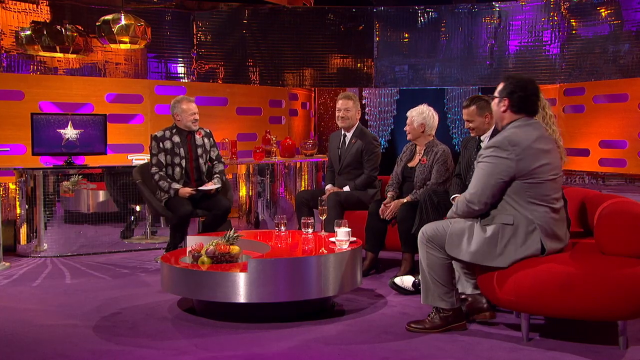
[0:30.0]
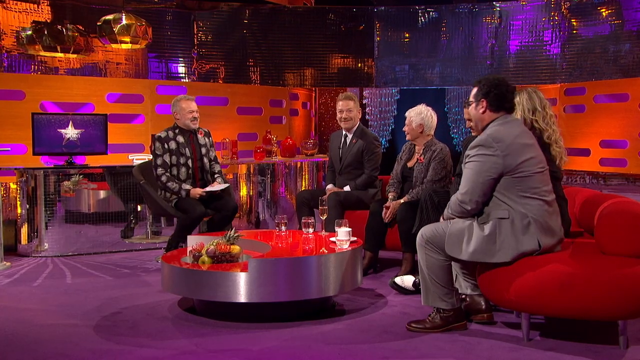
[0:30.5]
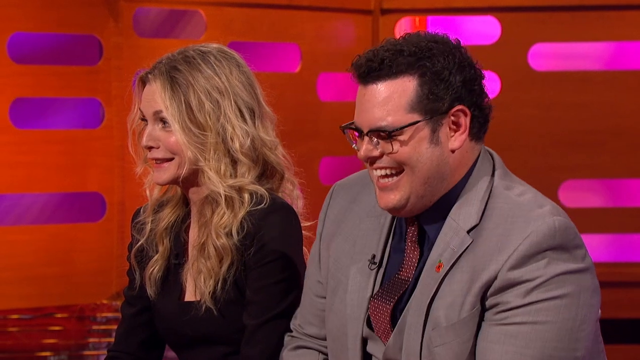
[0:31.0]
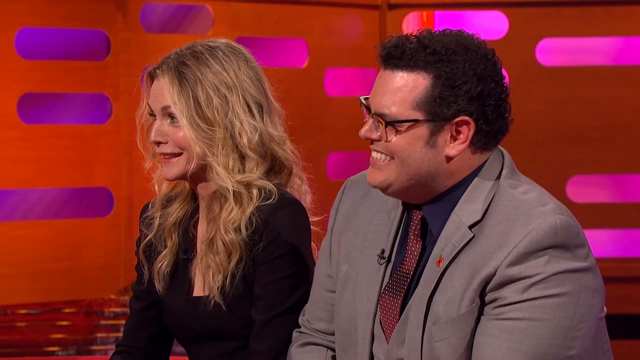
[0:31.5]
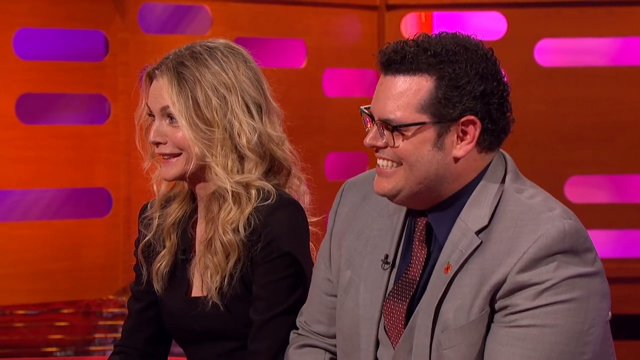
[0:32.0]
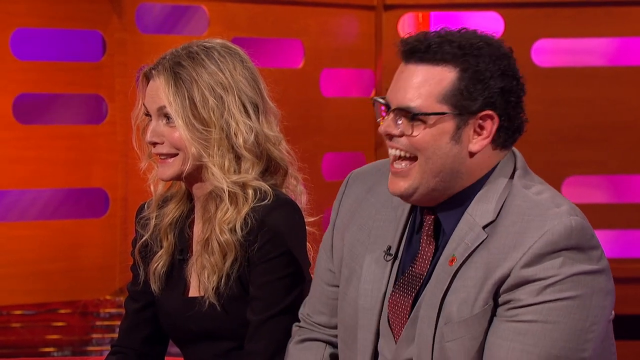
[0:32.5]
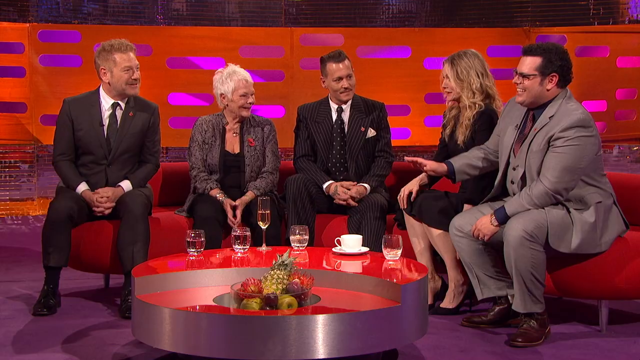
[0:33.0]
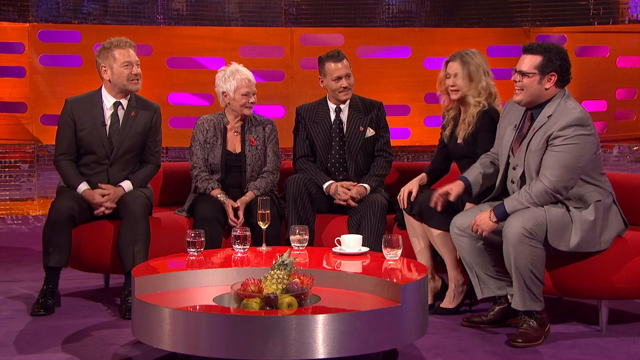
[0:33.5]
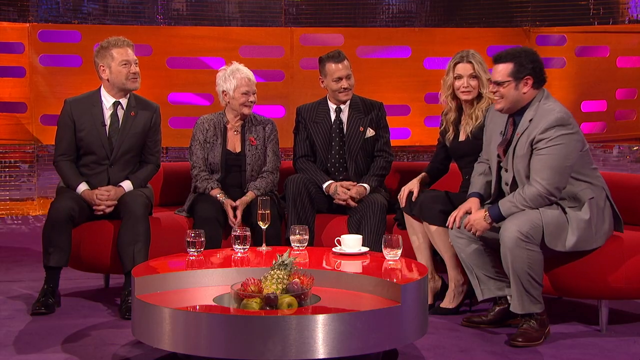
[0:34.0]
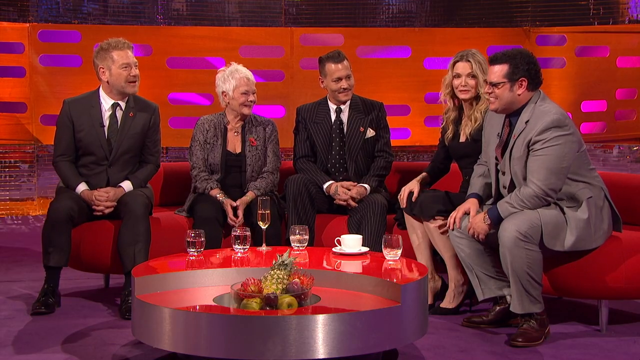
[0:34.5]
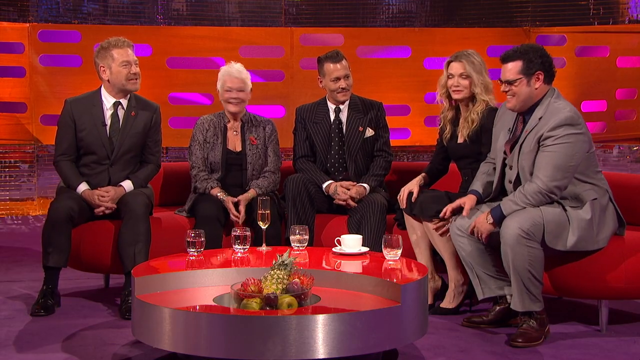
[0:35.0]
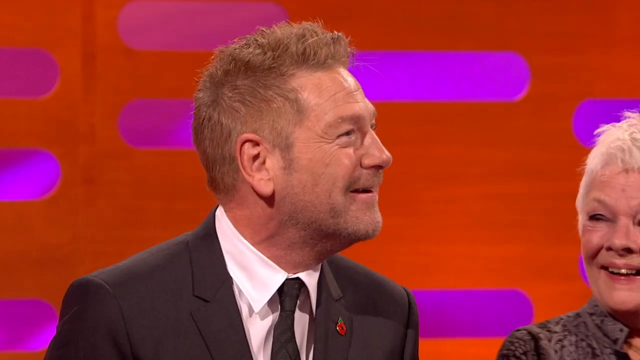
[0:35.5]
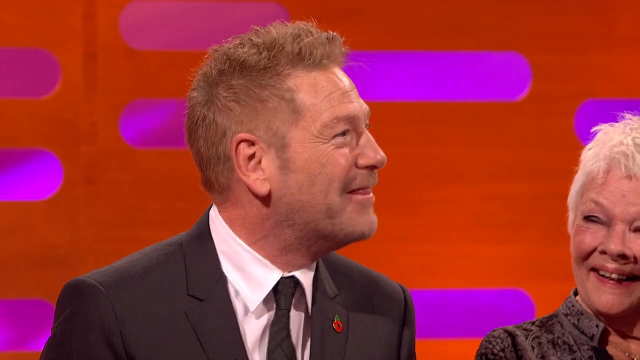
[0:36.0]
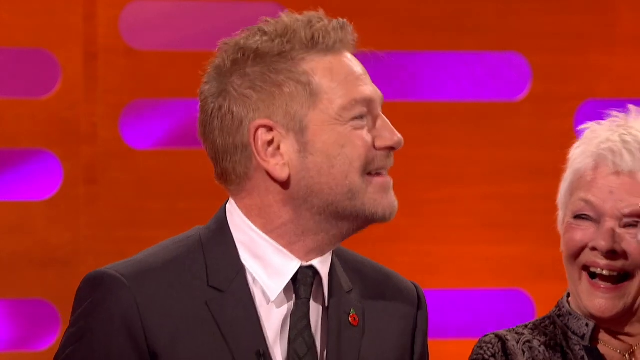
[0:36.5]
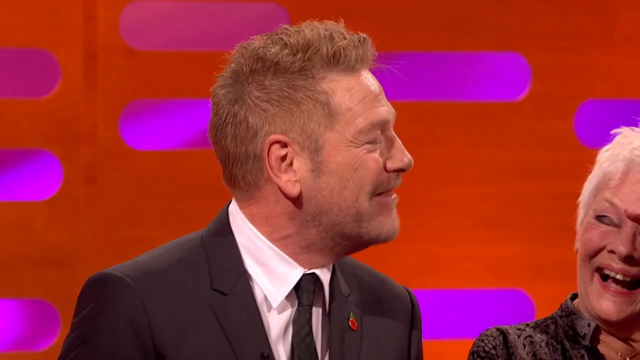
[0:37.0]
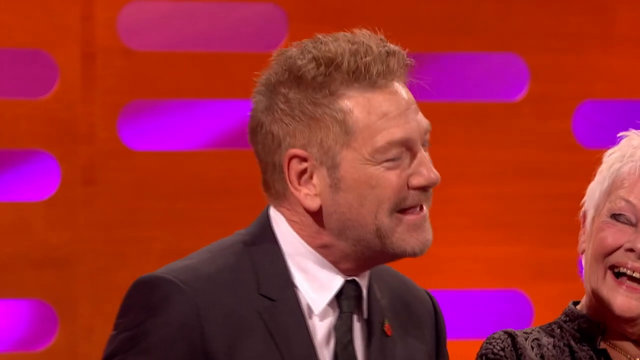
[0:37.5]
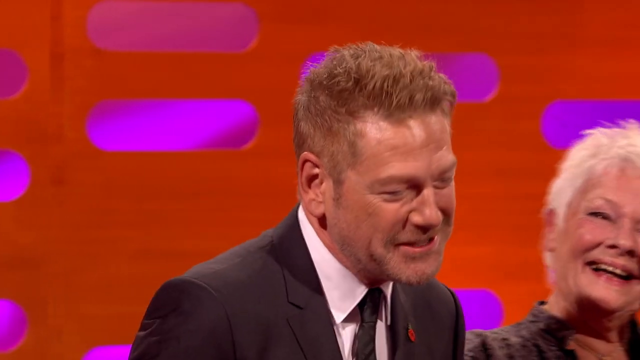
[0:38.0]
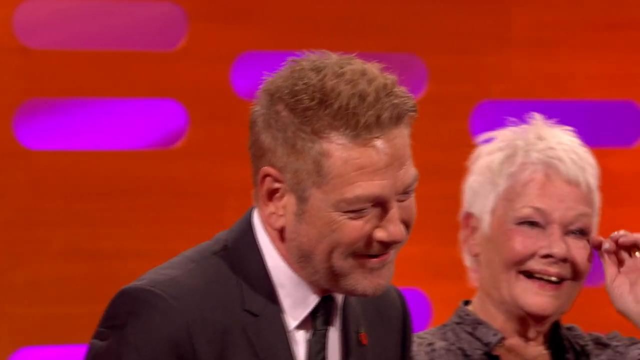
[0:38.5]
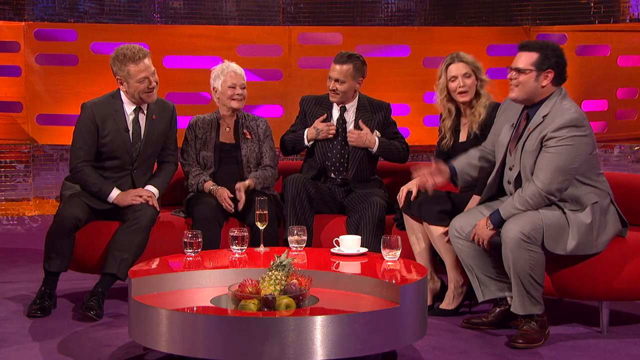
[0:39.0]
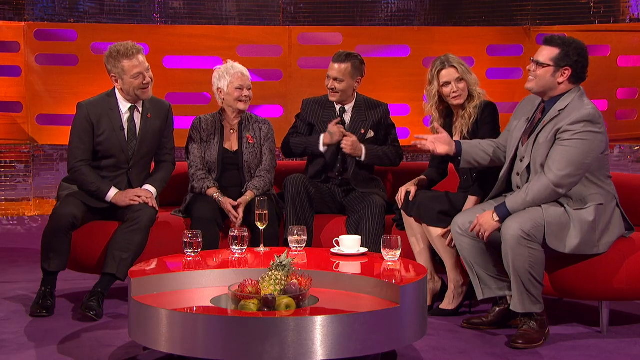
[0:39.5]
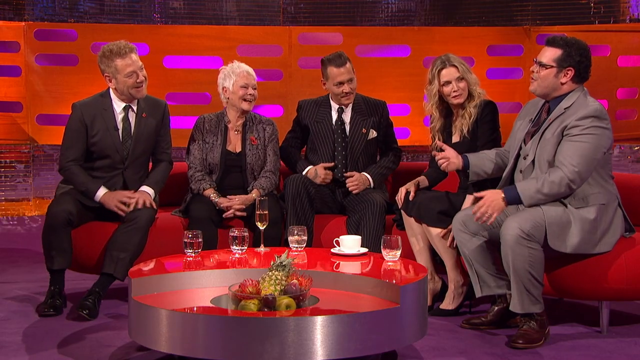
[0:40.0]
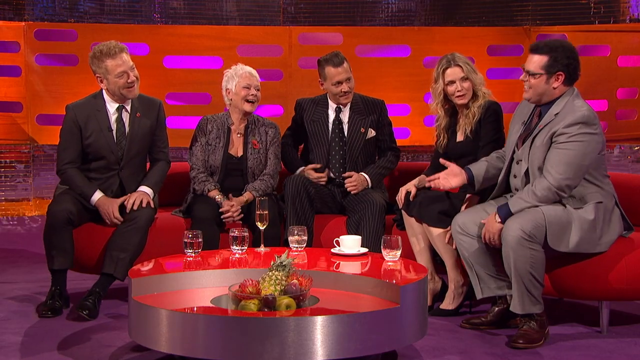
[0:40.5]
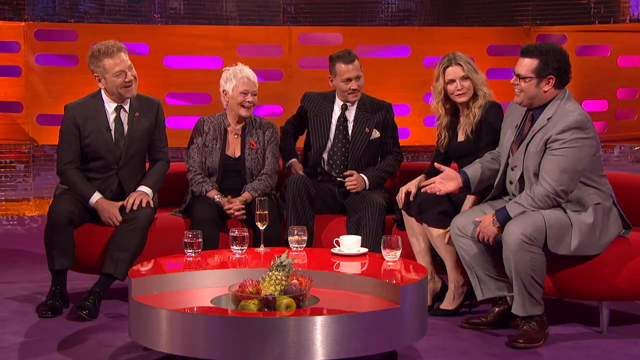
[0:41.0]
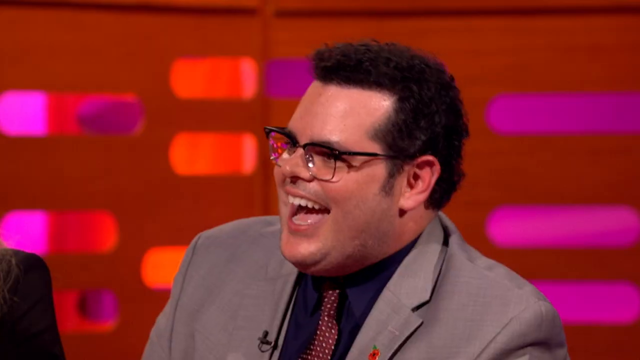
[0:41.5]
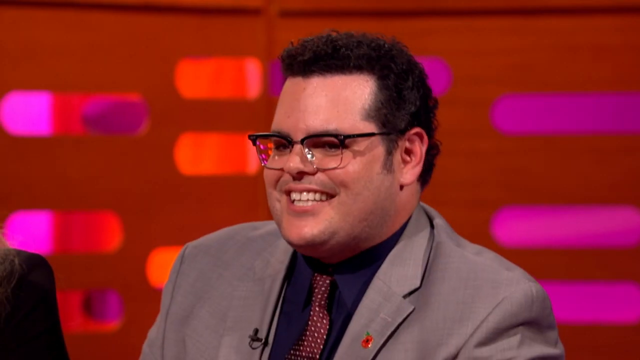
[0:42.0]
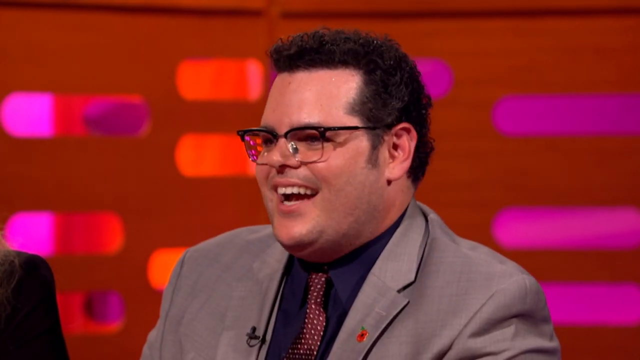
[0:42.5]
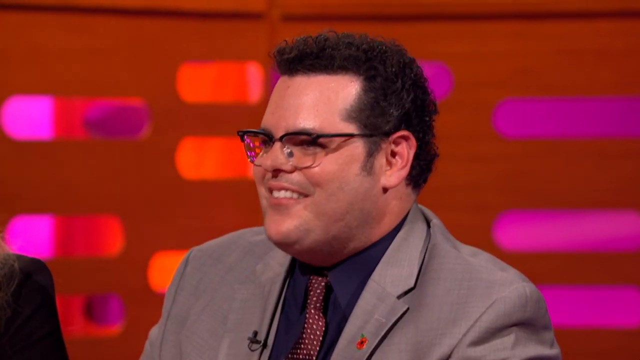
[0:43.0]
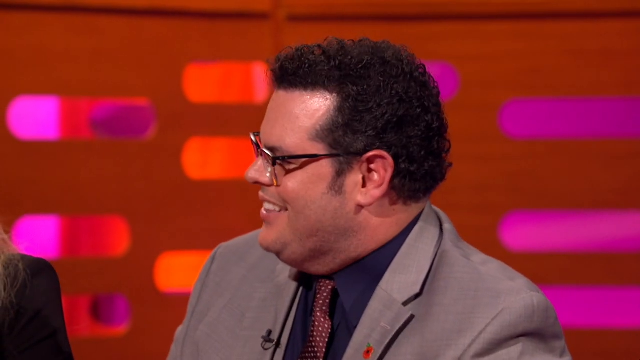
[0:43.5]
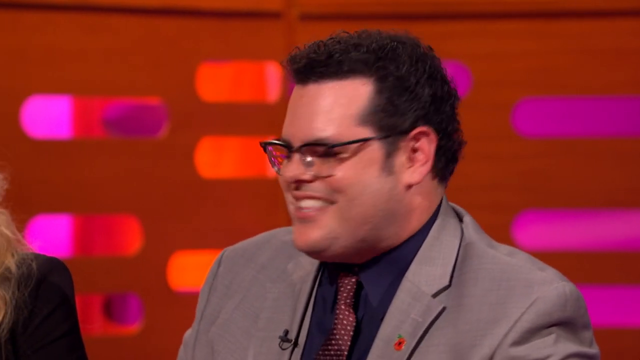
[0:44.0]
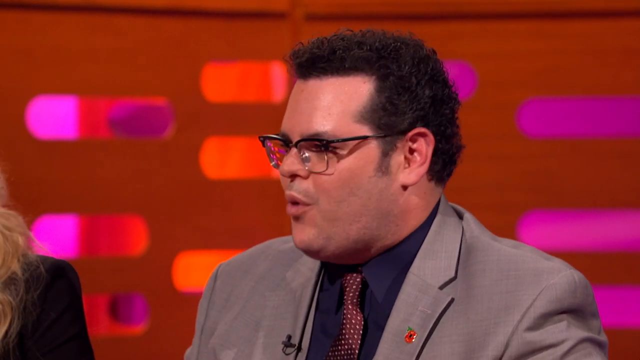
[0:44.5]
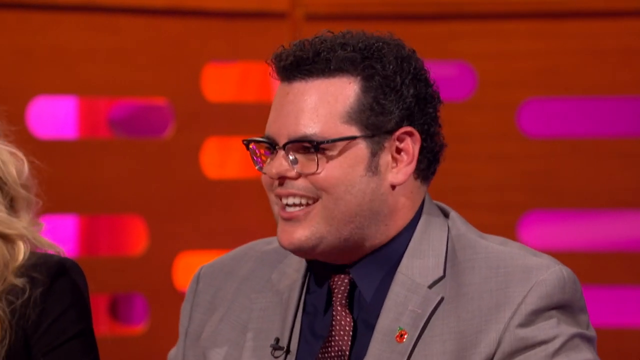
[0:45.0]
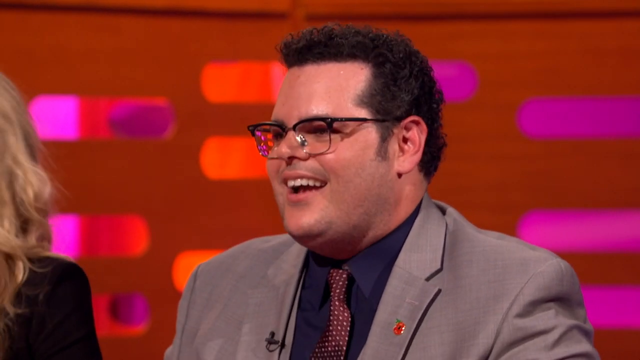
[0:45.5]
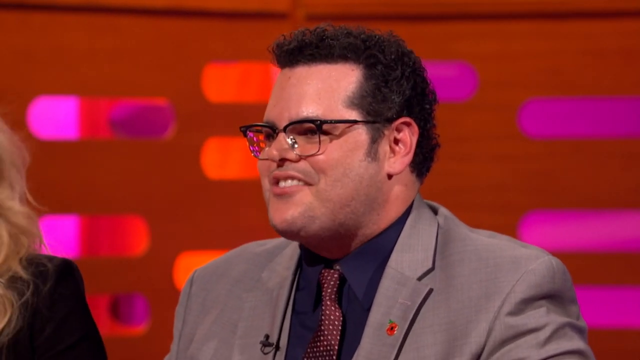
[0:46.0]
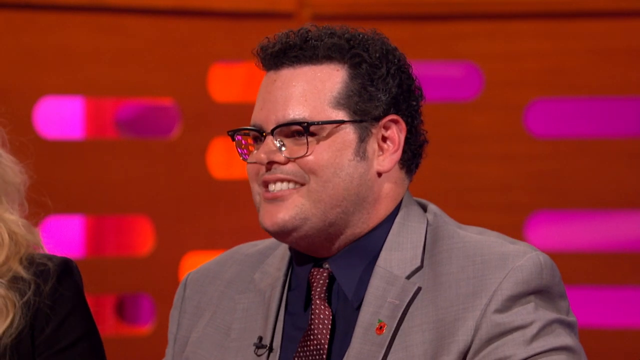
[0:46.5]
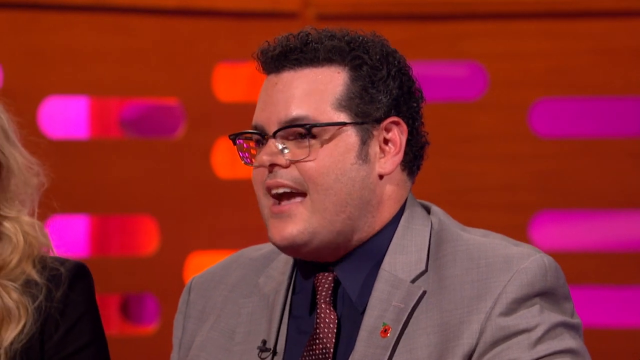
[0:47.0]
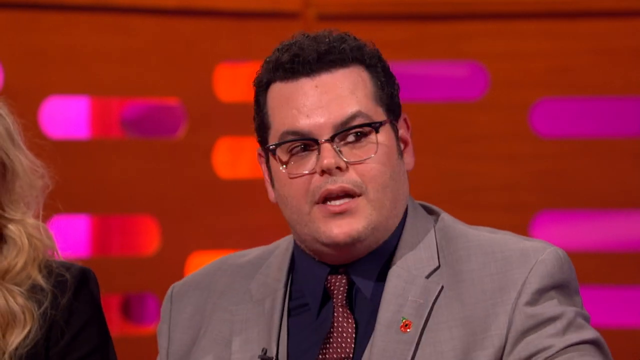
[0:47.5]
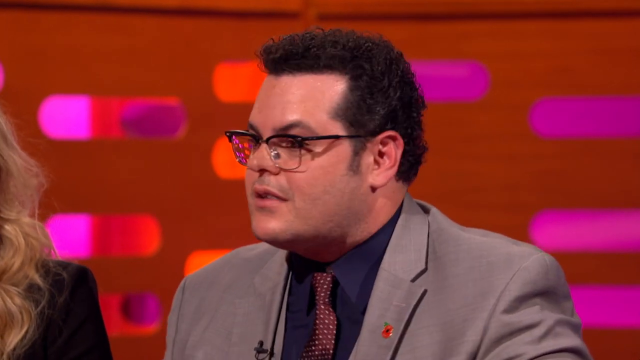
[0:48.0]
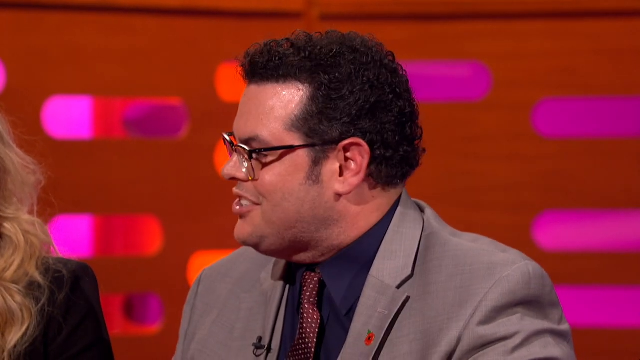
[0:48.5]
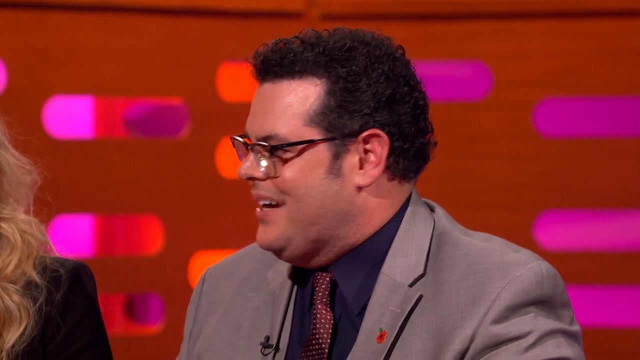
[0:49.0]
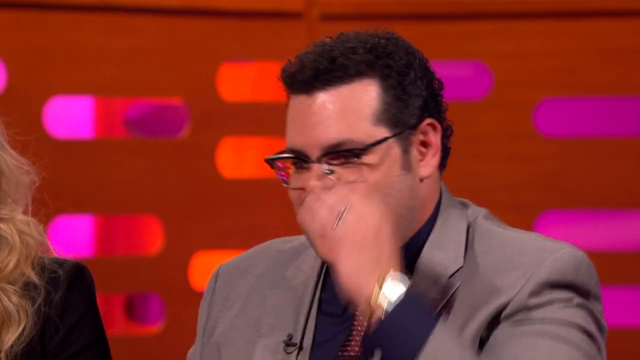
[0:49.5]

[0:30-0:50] The camera shows the man in the gray suit smiling, along with a blonde-haired woman who is smiling as well. The man in the gray suit speaks, and his ears seem to turn red, possibly from embarrassment; he keeps speaking as the whole group looks at him. The camera pans to the red-haired man, who speaks while moving his body forward, leaning toward the white-haired woman, with both hands on his left thigh. Johnny Depp, in the middle, seems to be fixing his suit, and the white-haired woman has both hands in her lap with her fingers interlaced. The camera pans back to the man in the gray suit, still smiling and speaking, his slightly jiggly chin jiggling. He wears glasses, which he fixes with his left hand. They seem to be joking about something, and the white-haired woman is laughing as well.